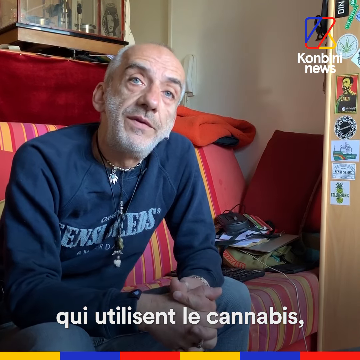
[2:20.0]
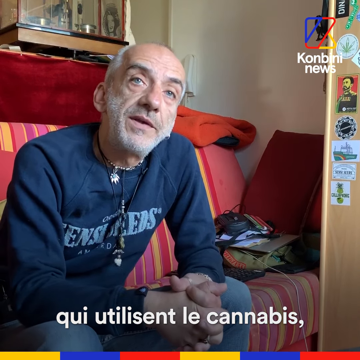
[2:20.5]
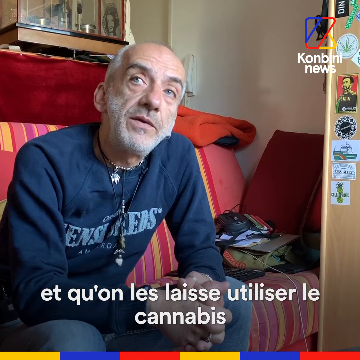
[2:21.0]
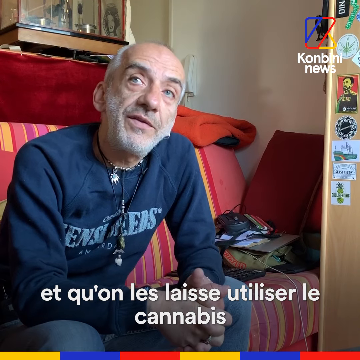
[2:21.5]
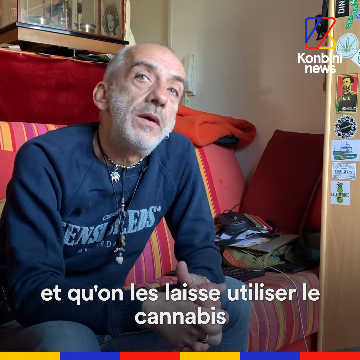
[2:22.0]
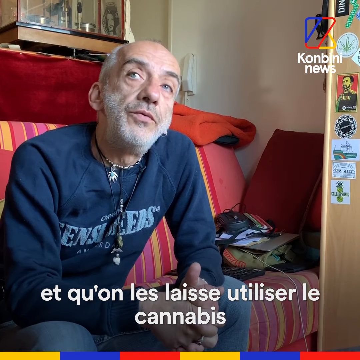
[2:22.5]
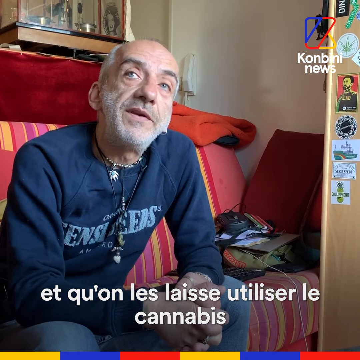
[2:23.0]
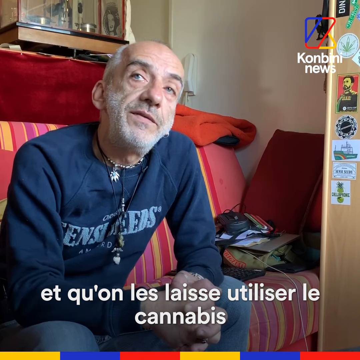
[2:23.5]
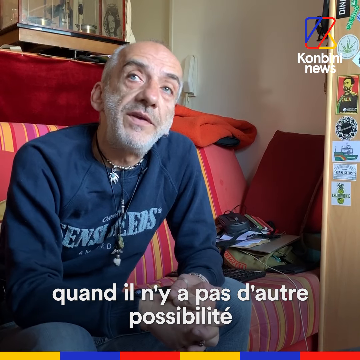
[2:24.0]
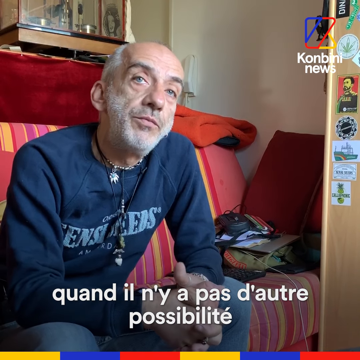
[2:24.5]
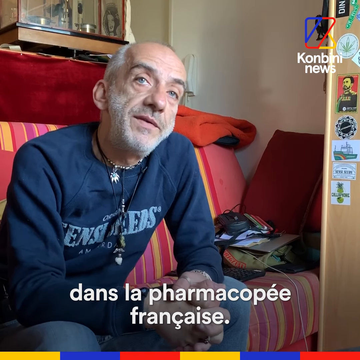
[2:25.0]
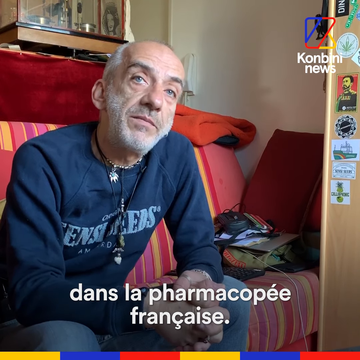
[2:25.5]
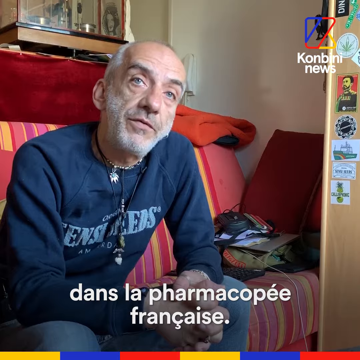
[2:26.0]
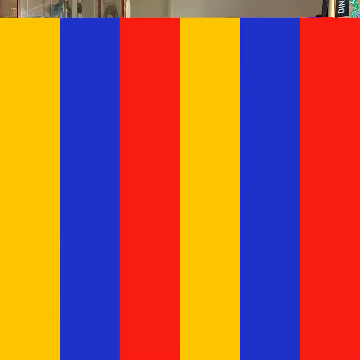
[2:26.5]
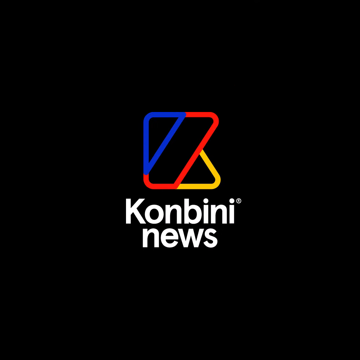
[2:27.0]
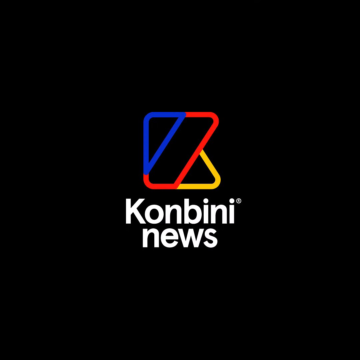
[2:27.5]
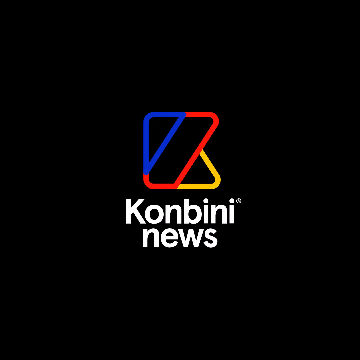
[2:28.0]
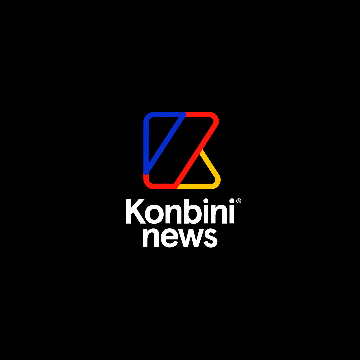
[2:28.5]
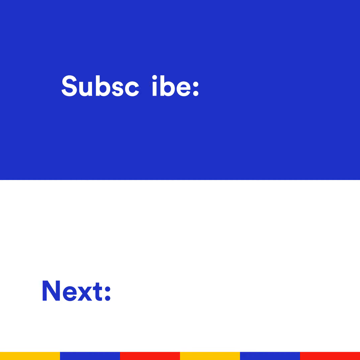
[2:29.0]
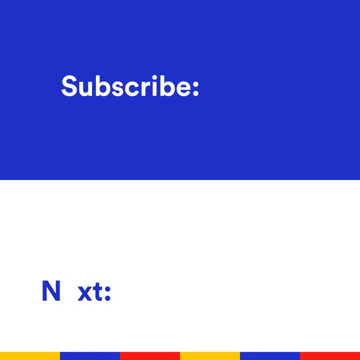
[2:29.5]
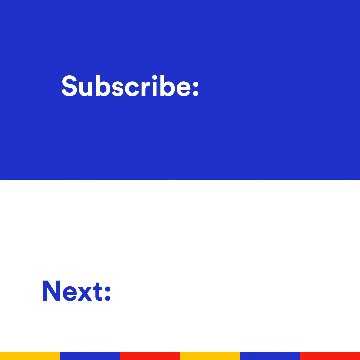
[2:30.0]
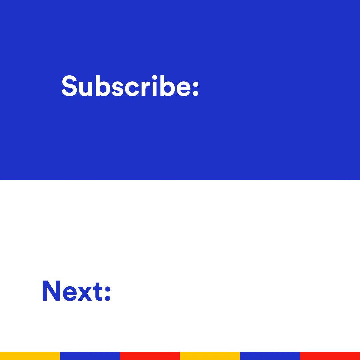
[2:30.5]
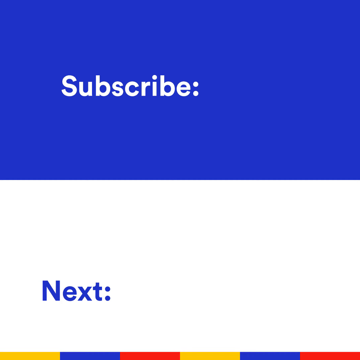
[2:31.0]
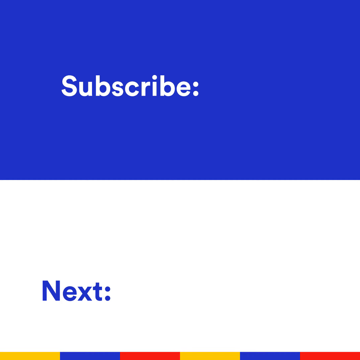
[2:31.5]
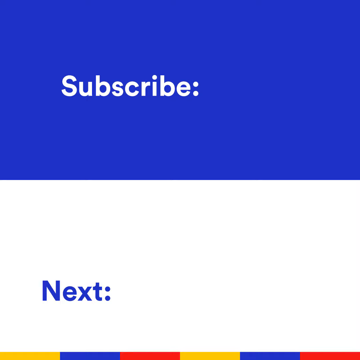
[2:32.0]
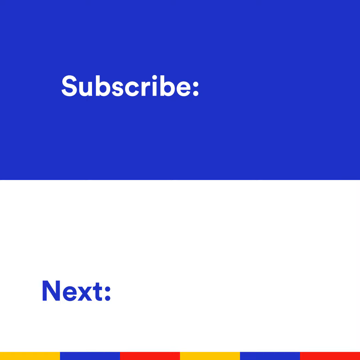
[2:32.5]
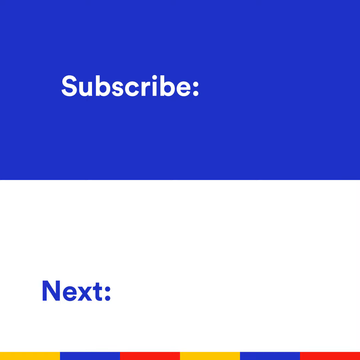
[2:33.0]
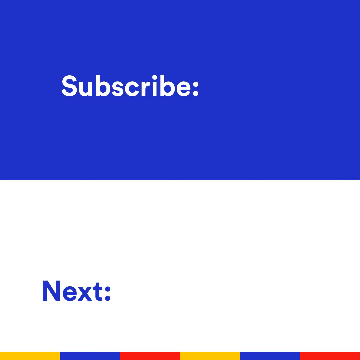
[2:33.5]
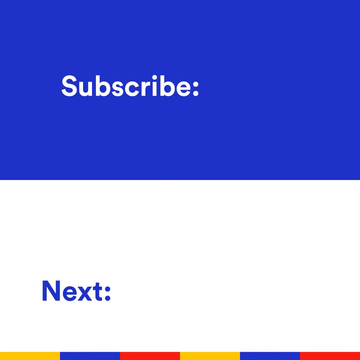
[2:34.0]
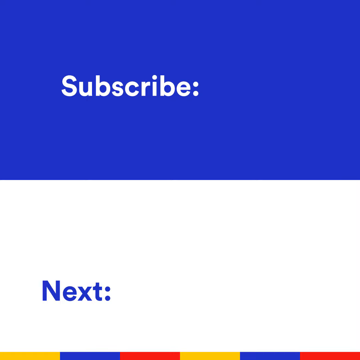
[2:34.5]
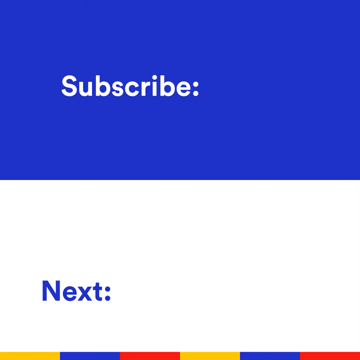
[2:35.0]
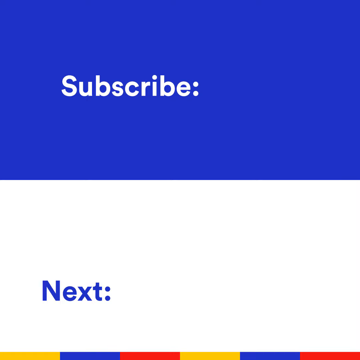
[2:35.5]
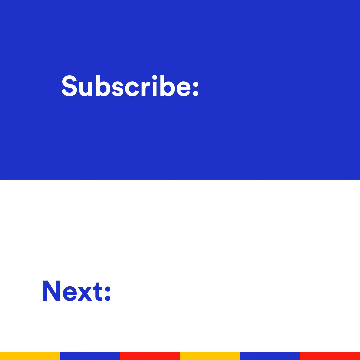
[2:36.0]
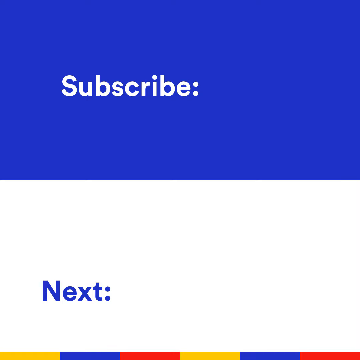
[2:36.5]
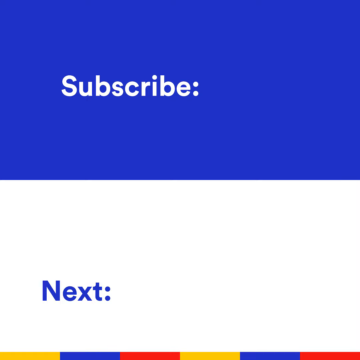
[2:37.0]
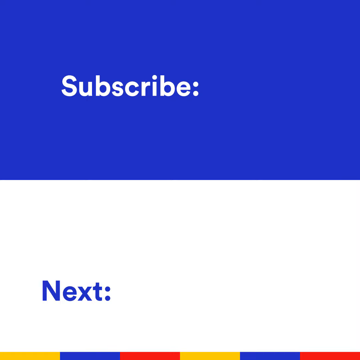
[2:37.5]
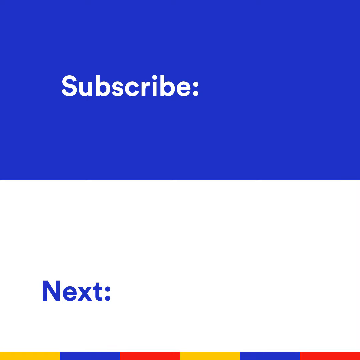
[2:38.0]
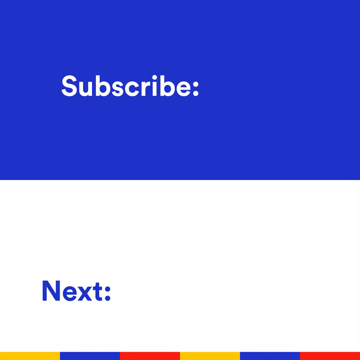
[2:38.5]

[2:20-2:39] He is on the sofa with his hands folded, explaining something. The Konbini News logo flashes up and fades out. Then two boxes appear: a blue top box with reversed white type and the Konbini logo, and a white bottom box. The text "next" appears, and a pop-up screen shows in the white bottom box. The scene flashes back to the man on the sofa talking and explaining, and then the Konbini colors flash across the screen in large vertical bars that fill the screen. It fades to the two boxes again, blue on top and white on the bottom, with "Subscribe" at the top with the Konbini logo and "Next" below, a little pop-up video in the lower box, and the two black boxes on the sides.